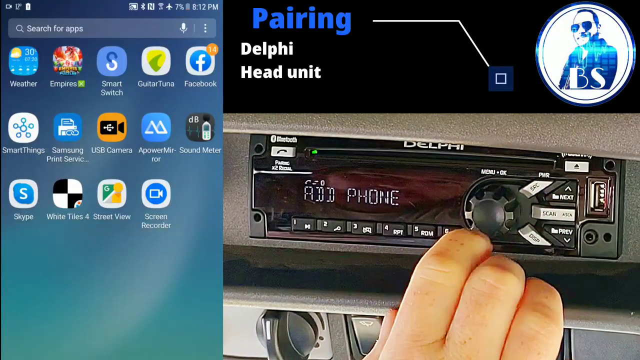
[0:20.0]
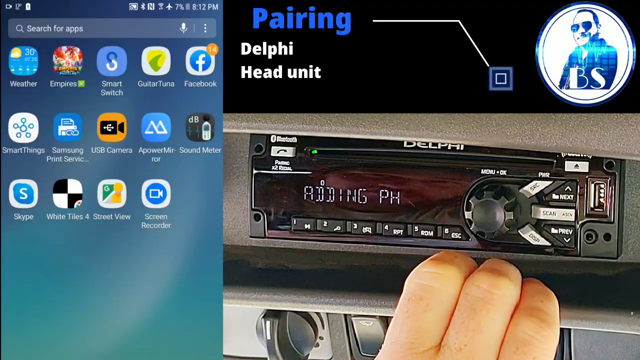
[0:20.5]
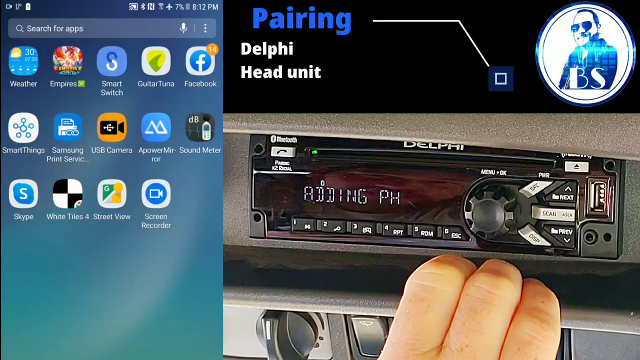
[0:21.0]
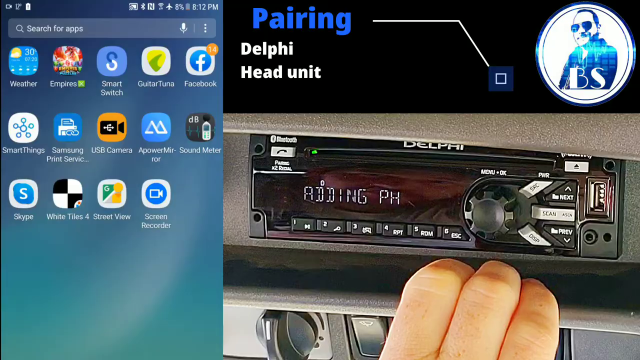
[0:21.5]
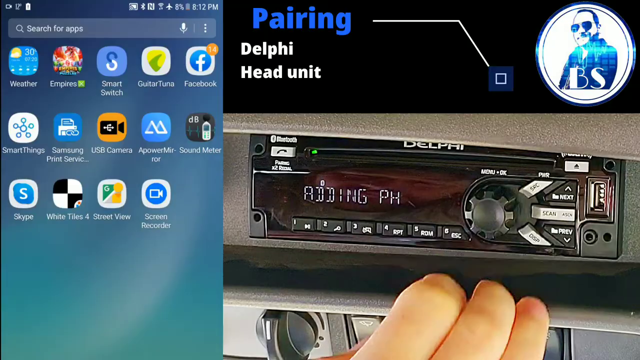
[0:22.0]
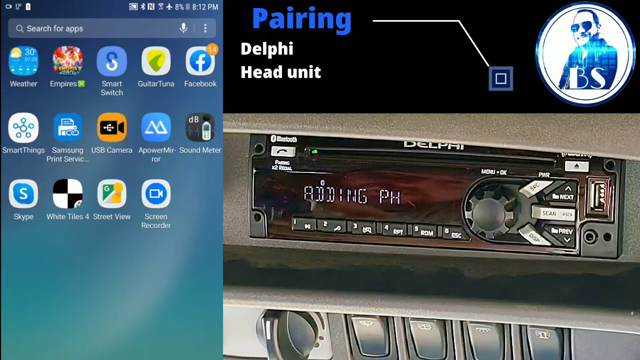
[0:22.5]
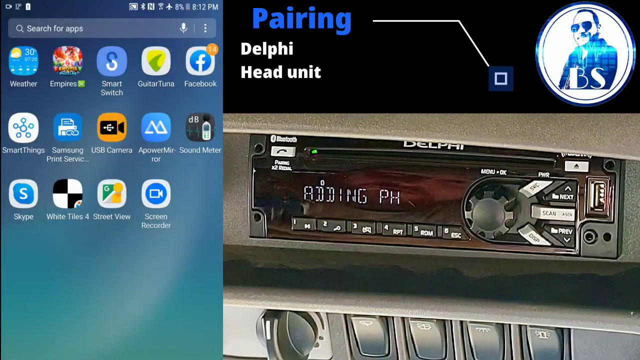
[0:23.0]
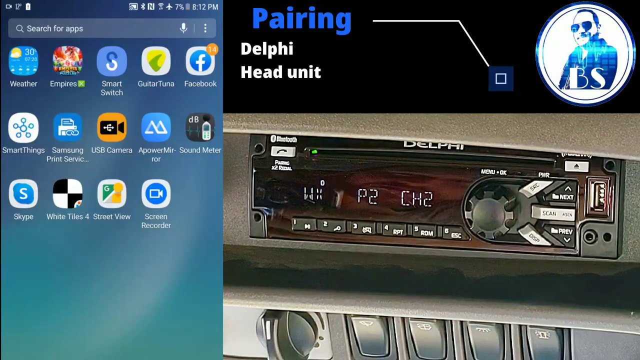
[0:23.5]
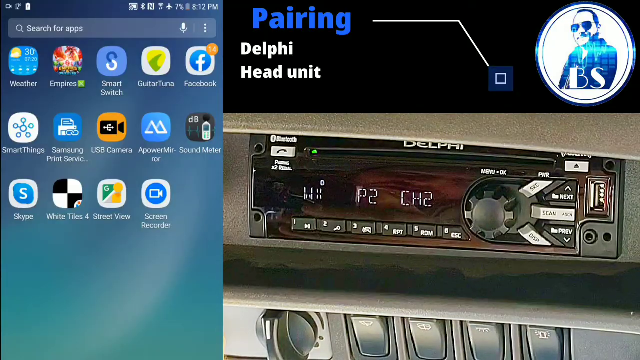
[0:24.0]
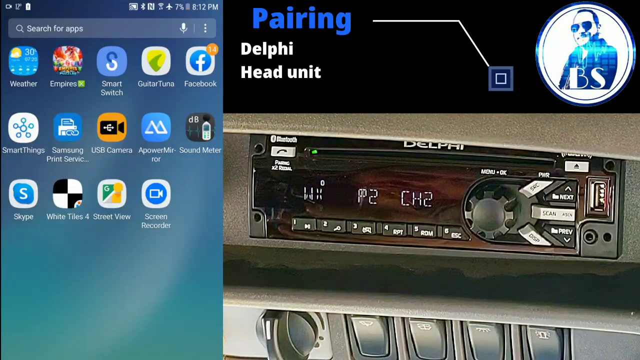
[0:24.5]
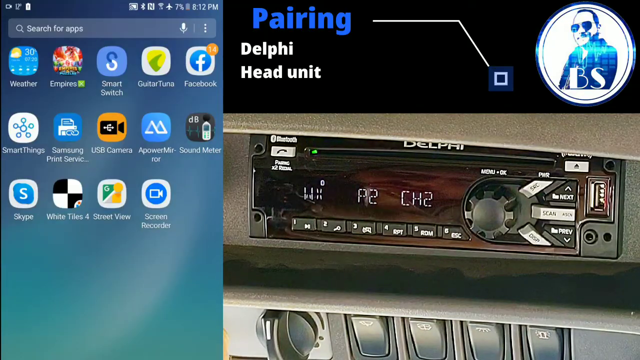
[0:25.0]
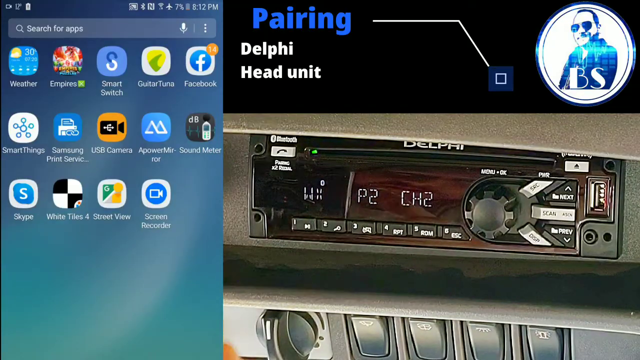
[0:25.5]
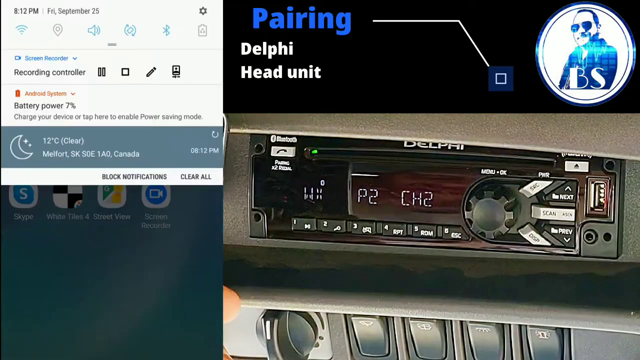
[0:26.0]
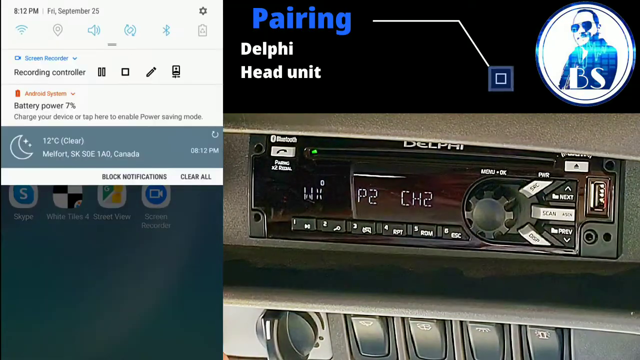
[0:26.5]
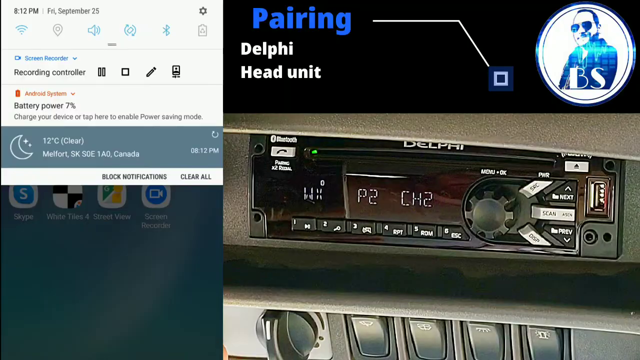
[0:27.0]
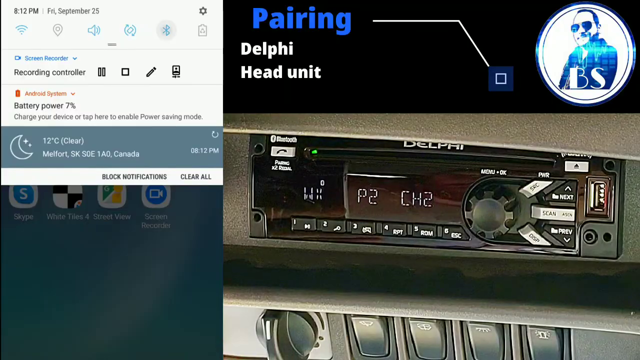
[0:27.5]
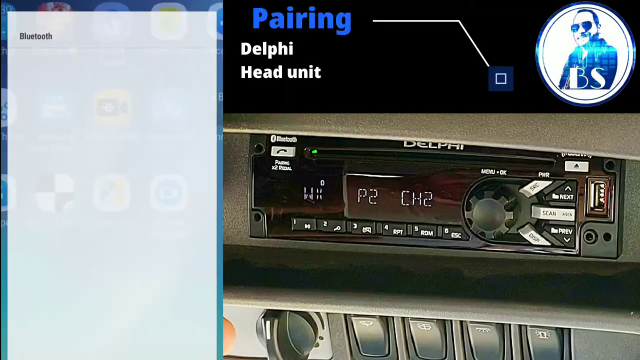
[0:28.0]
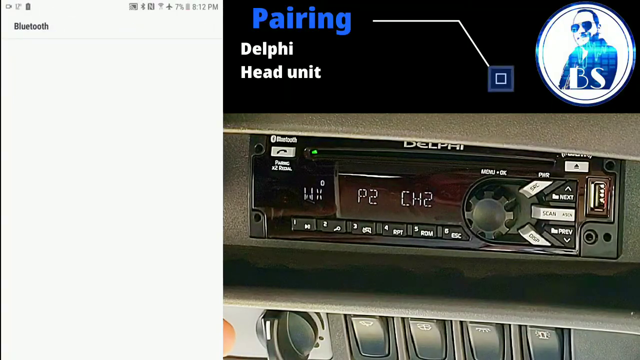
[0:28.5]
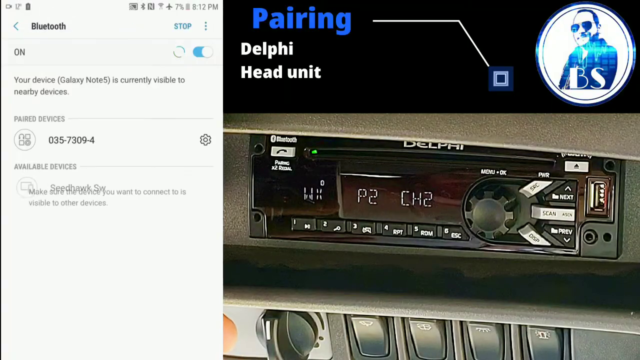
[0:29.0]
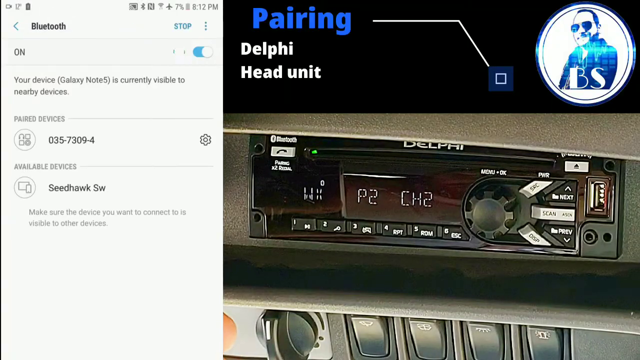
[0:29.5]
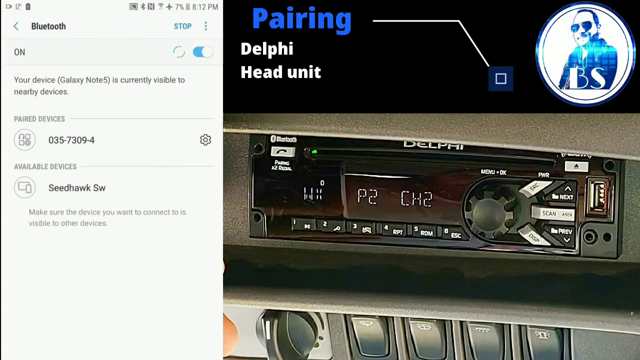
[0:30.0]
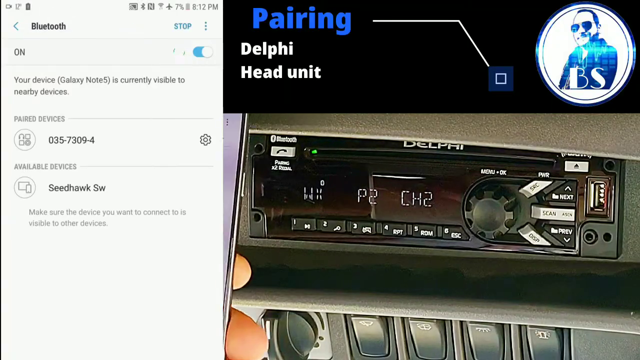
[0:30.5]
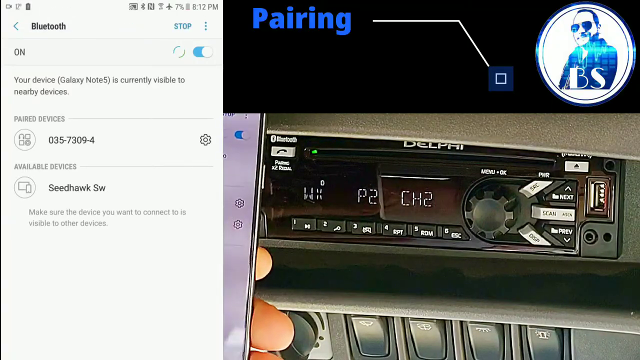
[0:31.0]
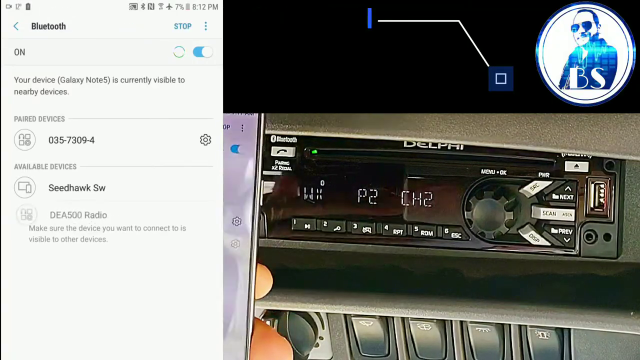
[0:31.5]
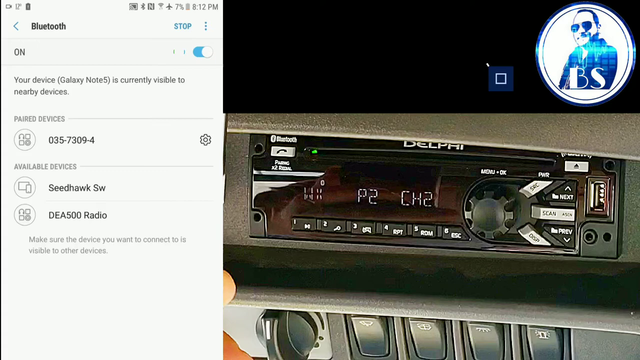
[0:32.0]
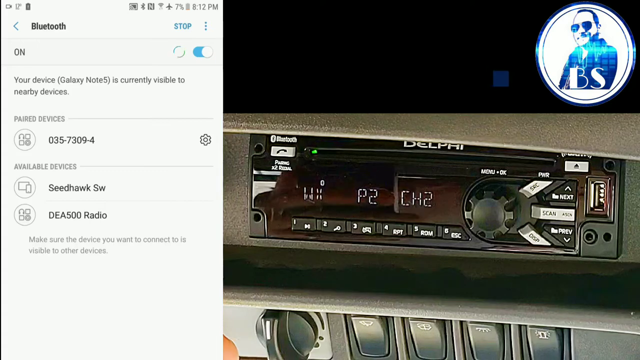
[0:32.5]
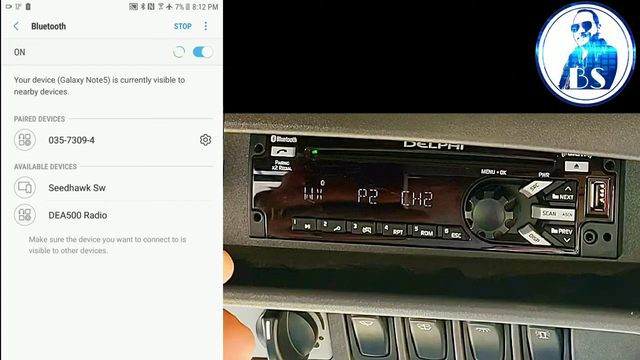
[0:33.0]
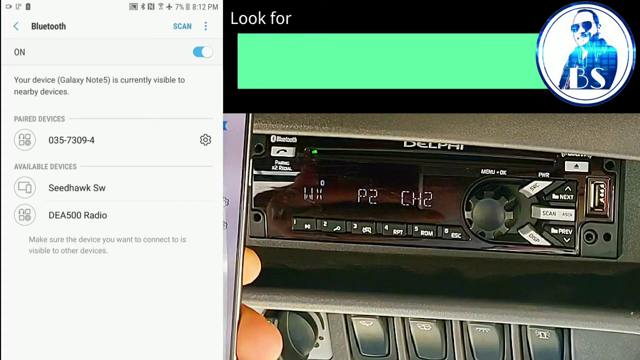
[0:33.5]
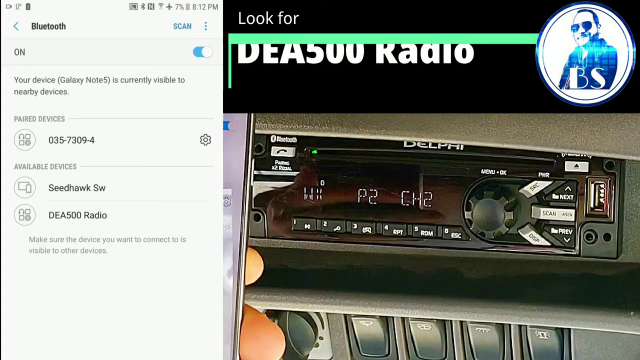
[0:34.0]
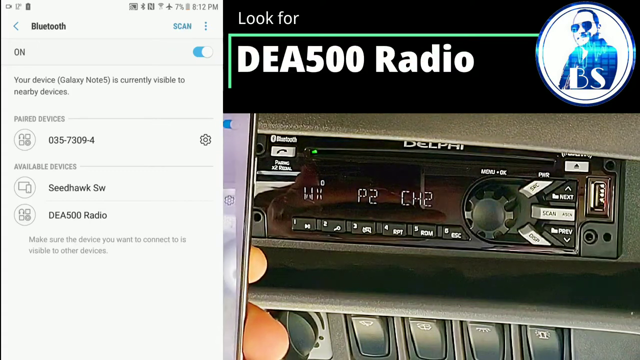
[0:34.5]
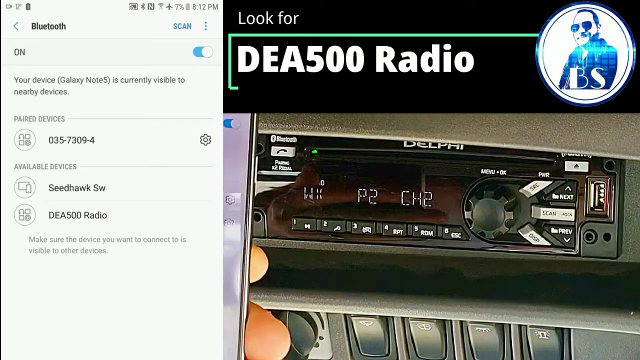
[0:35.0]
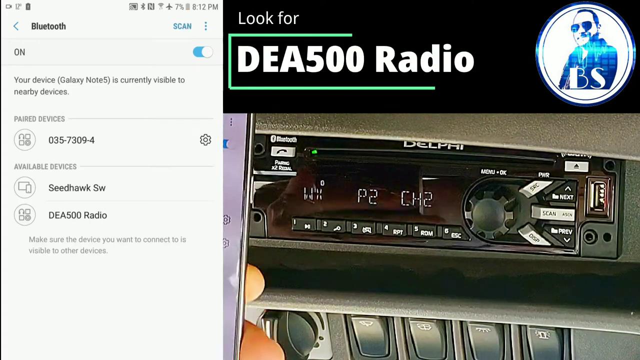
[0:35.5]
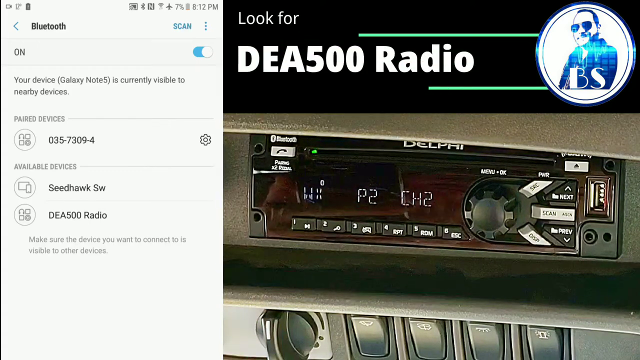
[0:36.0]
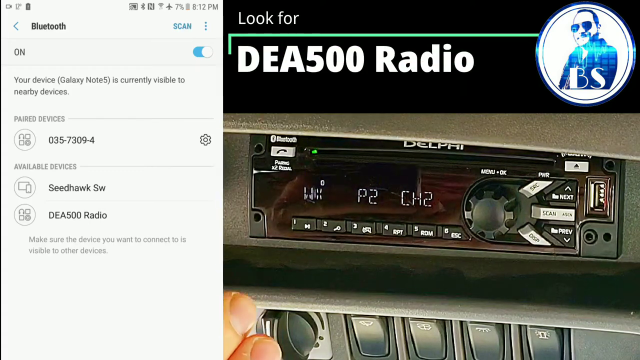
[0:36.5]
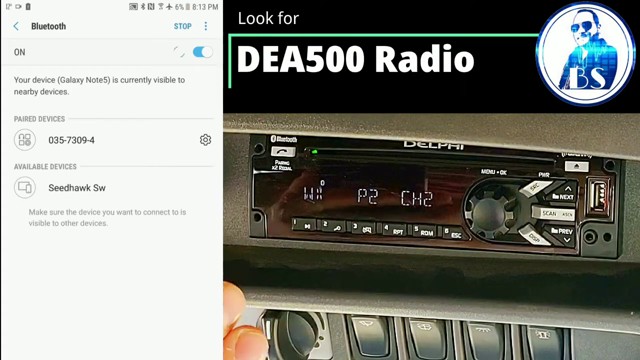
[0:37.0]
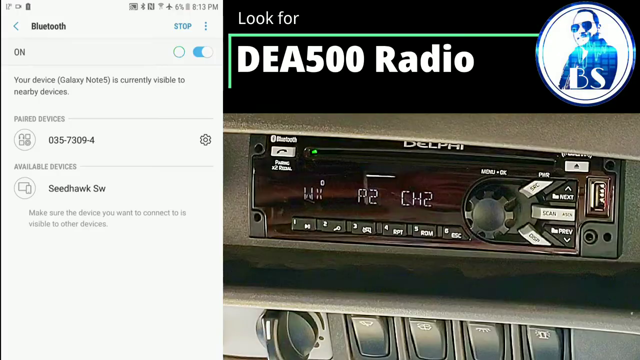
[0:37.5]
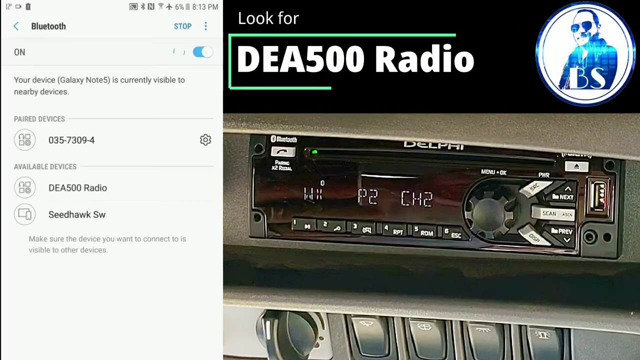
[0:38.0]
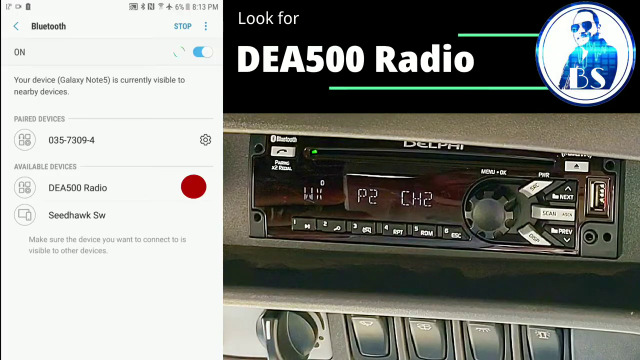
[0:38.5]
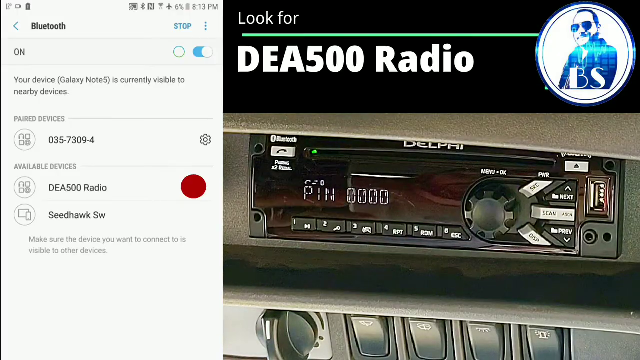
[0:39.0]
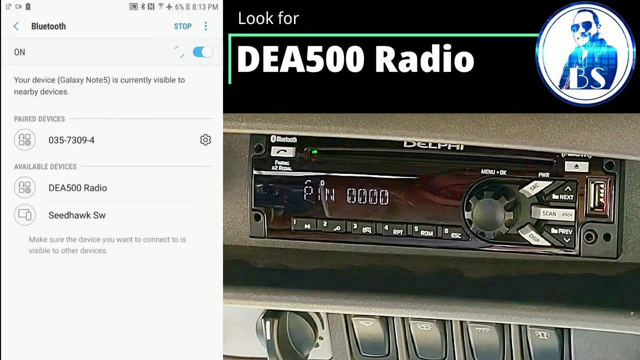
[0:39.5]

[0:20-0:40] The split screen continues, with one side static and the other a live video. The static side is a phone's home screen displaying 14 different apps, ranging from games to social media sites to hardware equipment to Google apps. Next to it, a person touches the knob of a car radio or audio system. At the top, blue text reads "pairing", with "Delphi head unit" under it. The radio's screen shows the text "WX P2 CH2". The person then opens the drop-down menu on the phone's lock screen, selects Bluetooth, and turns Bluetooth on. The text "look for DEA-500 radio" appears at the top of the video side. On the phone side, the radio is found by the phone.